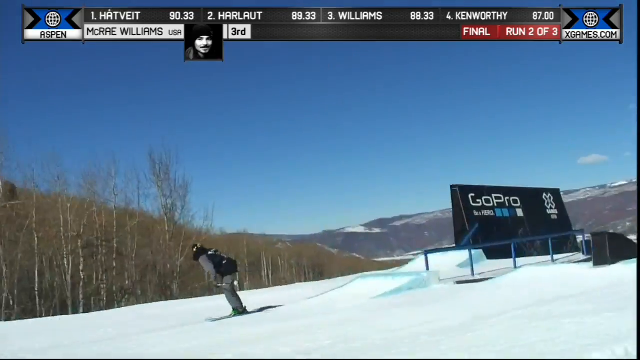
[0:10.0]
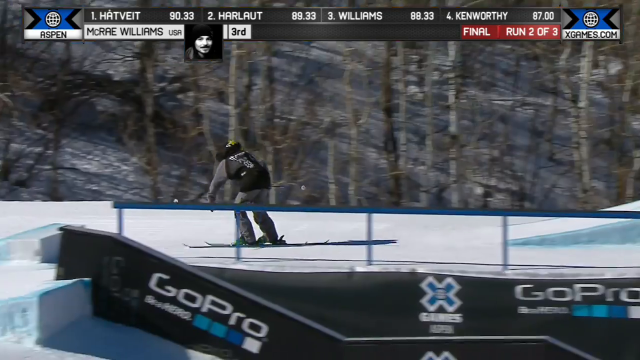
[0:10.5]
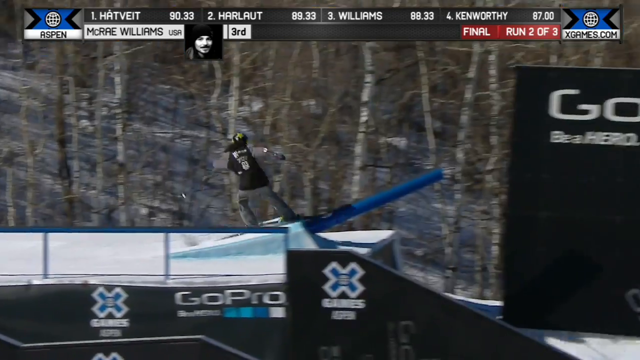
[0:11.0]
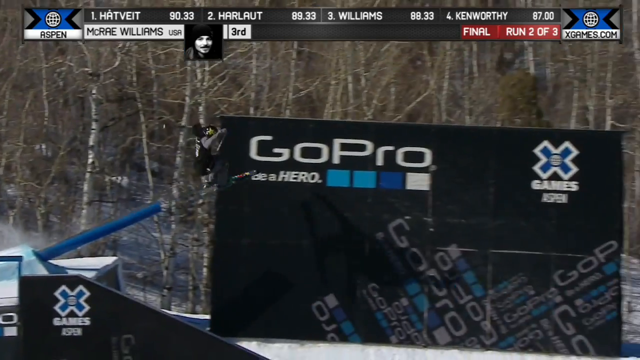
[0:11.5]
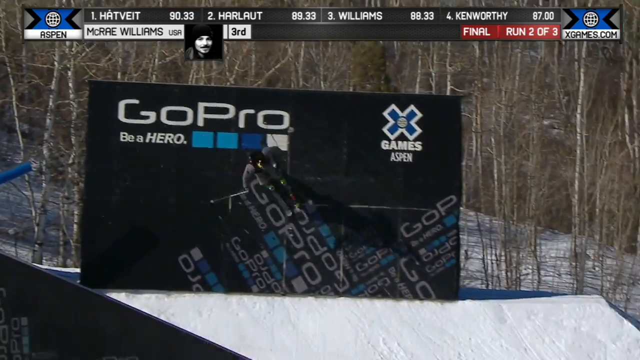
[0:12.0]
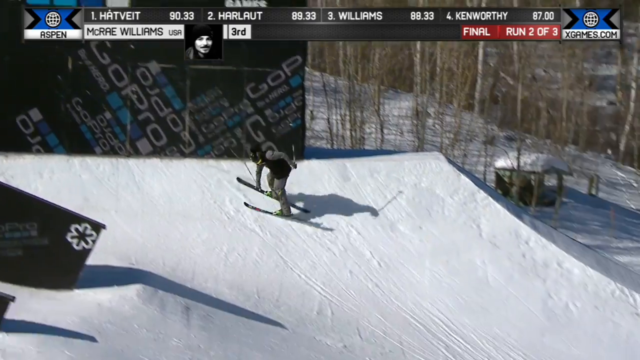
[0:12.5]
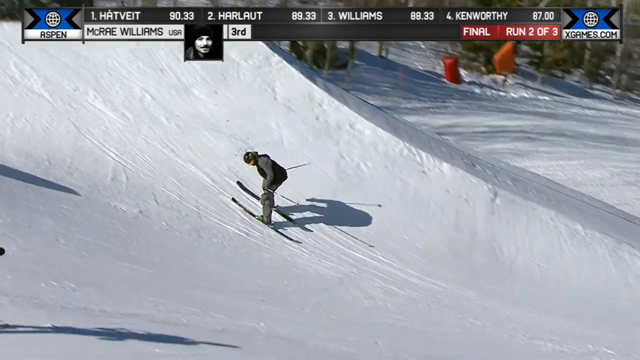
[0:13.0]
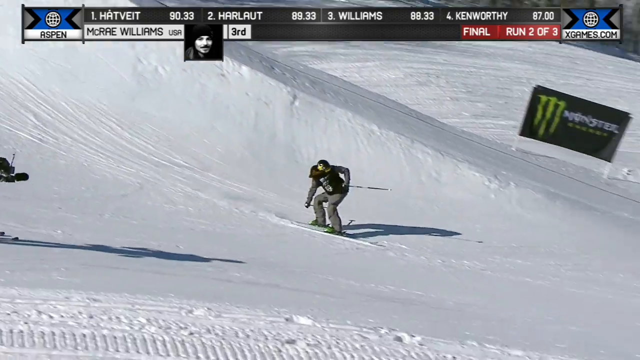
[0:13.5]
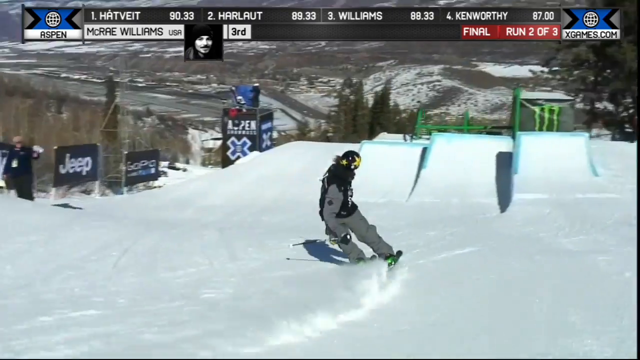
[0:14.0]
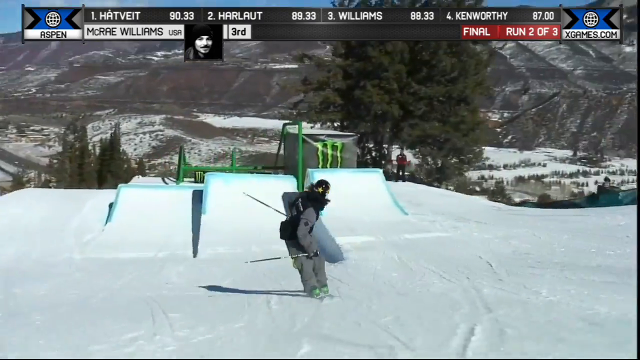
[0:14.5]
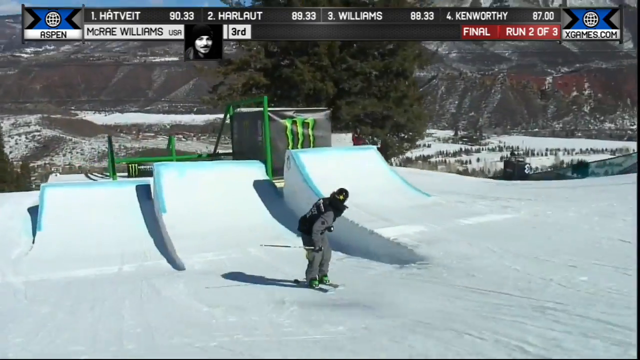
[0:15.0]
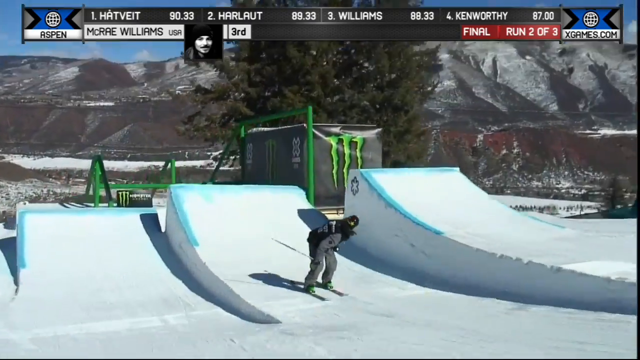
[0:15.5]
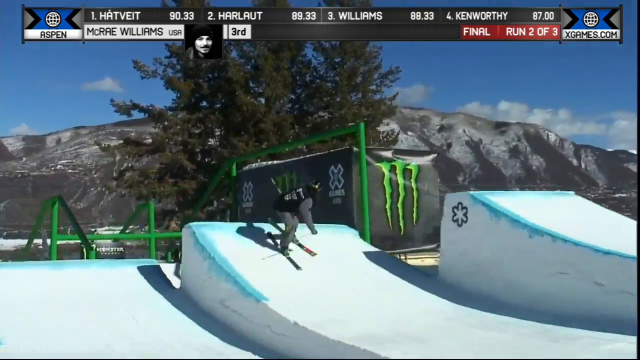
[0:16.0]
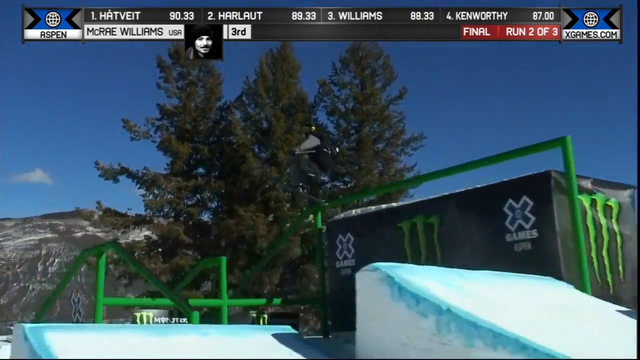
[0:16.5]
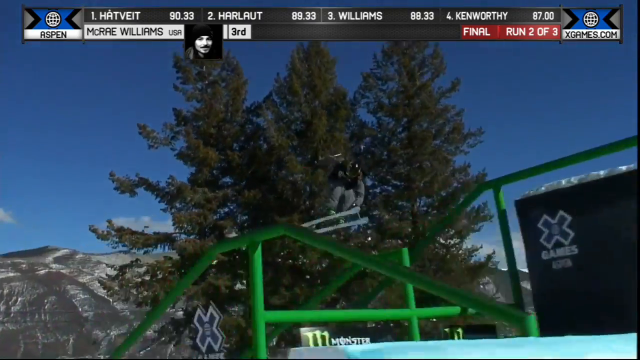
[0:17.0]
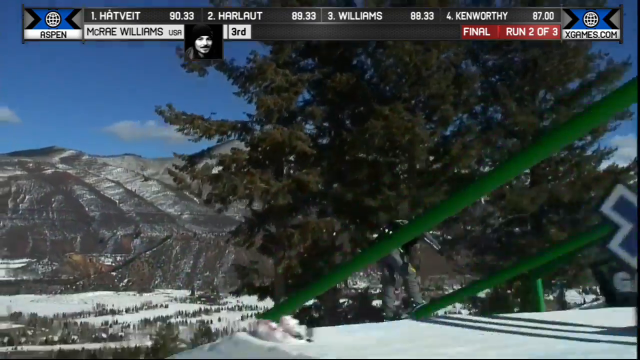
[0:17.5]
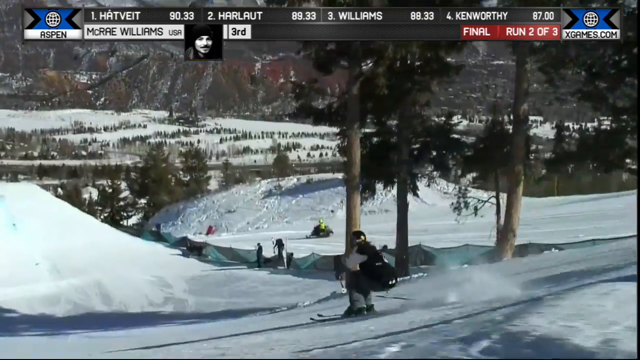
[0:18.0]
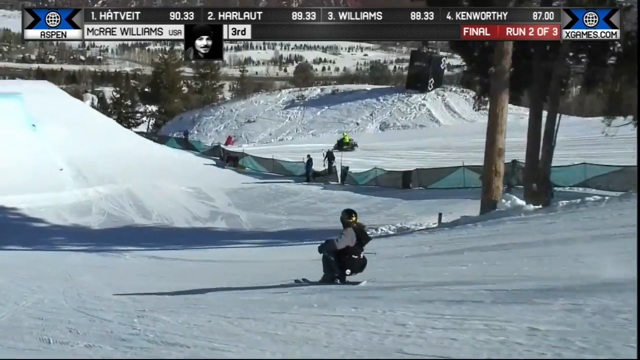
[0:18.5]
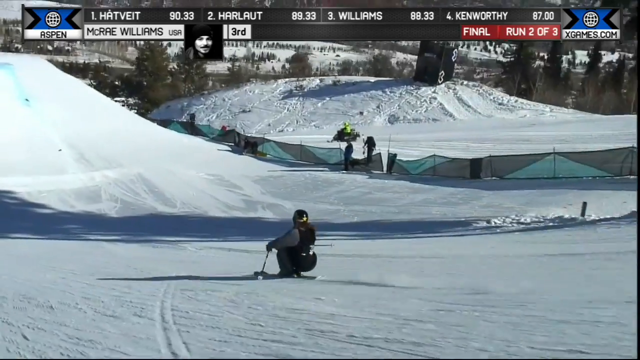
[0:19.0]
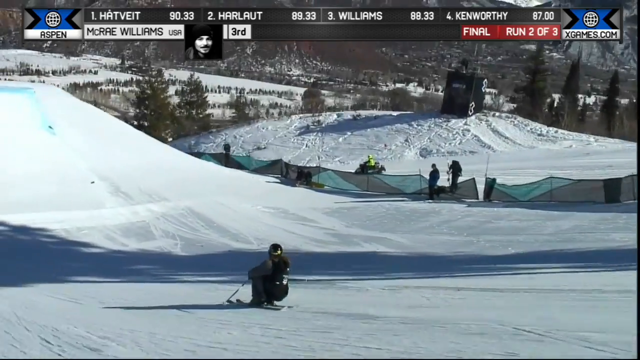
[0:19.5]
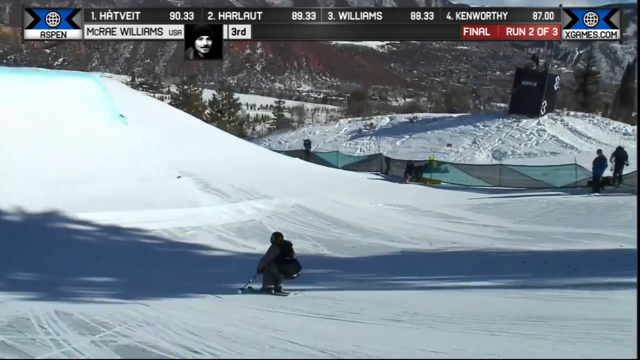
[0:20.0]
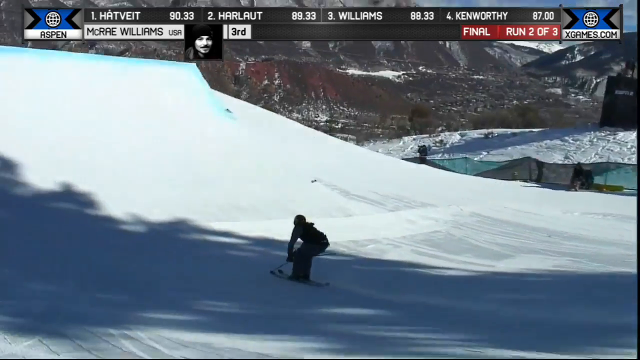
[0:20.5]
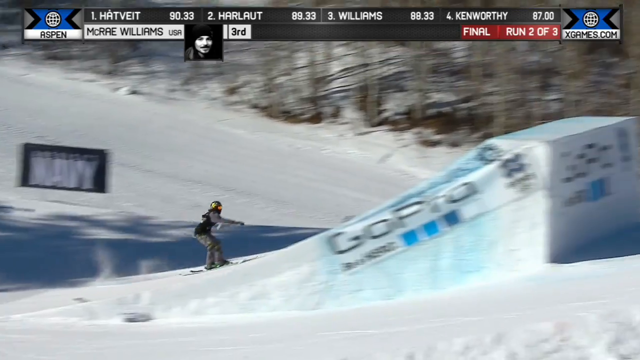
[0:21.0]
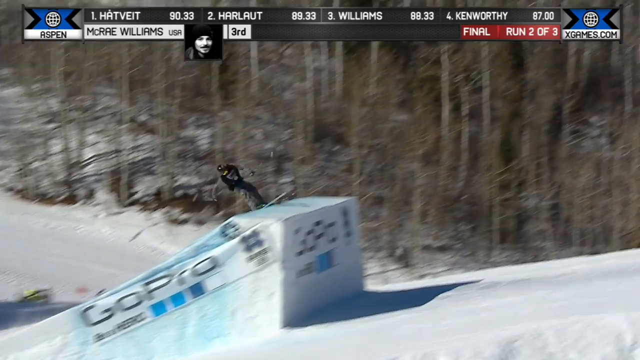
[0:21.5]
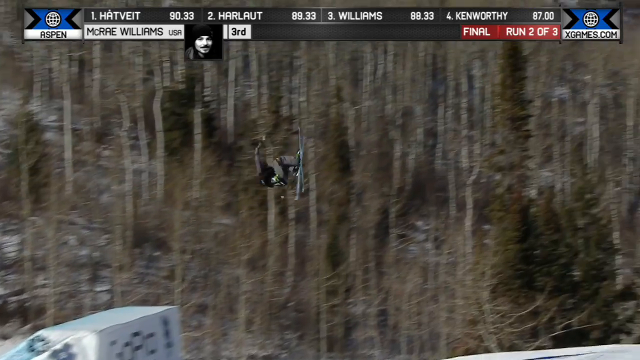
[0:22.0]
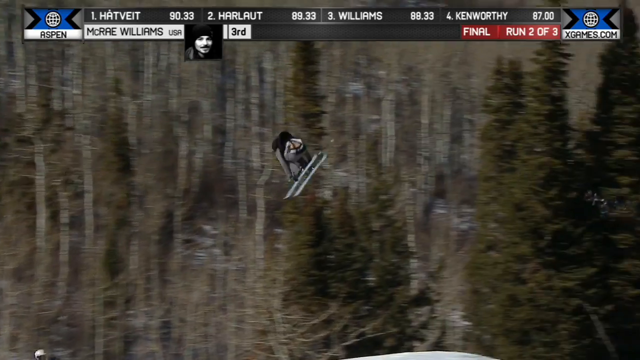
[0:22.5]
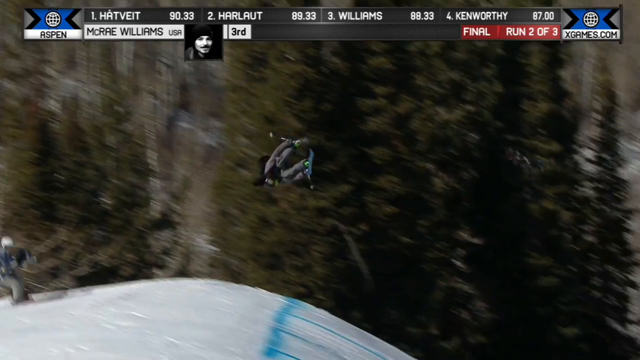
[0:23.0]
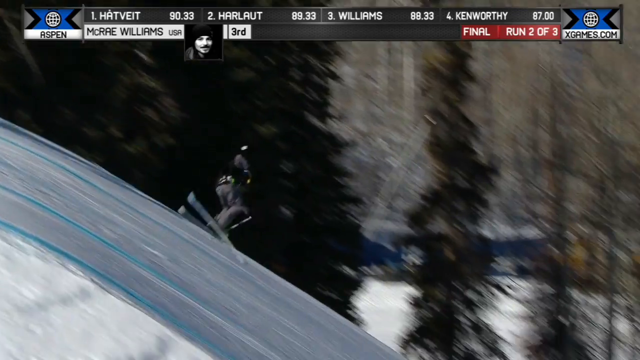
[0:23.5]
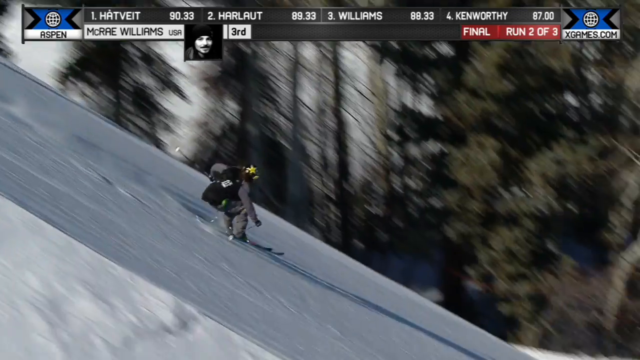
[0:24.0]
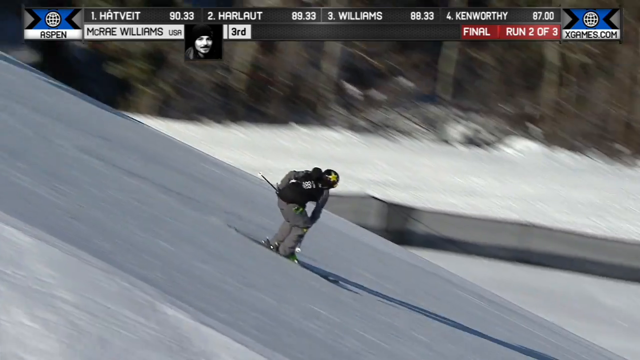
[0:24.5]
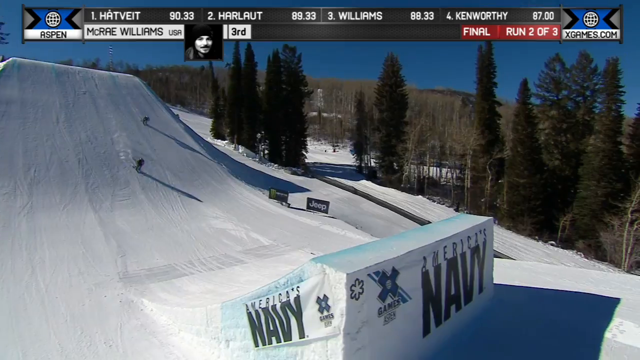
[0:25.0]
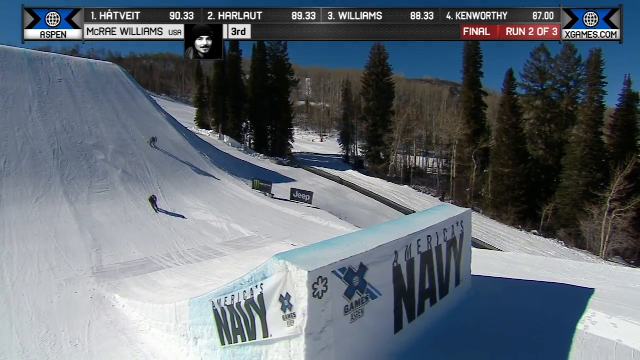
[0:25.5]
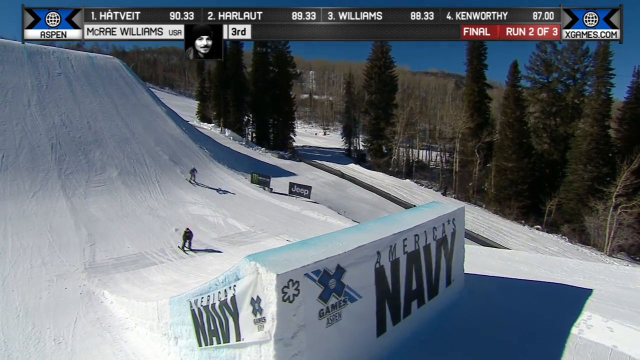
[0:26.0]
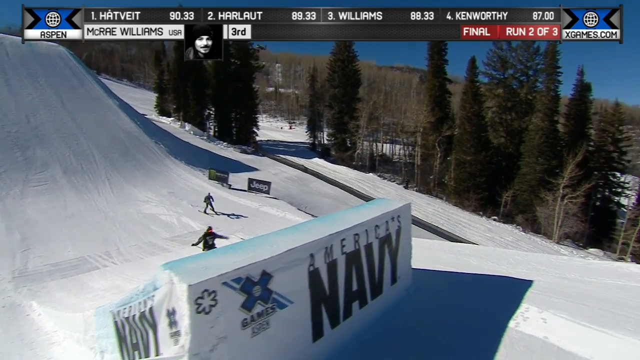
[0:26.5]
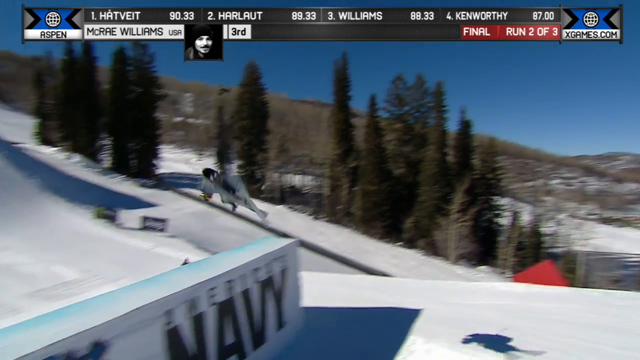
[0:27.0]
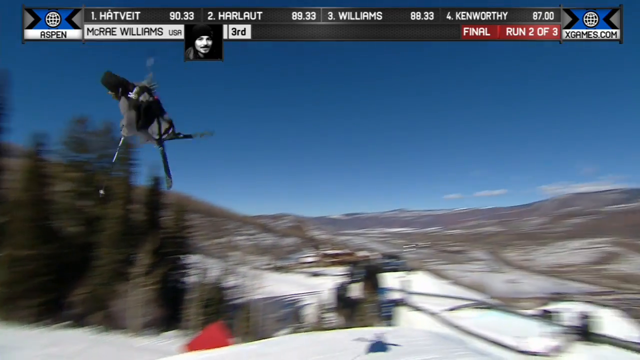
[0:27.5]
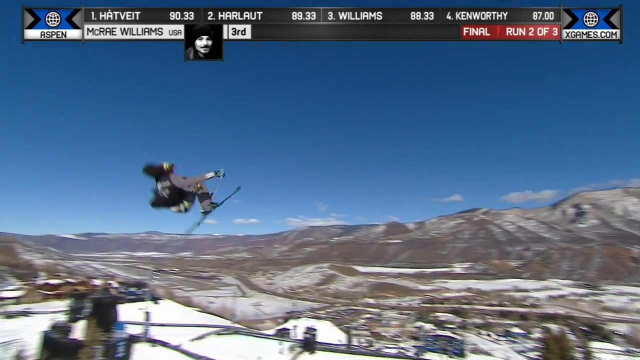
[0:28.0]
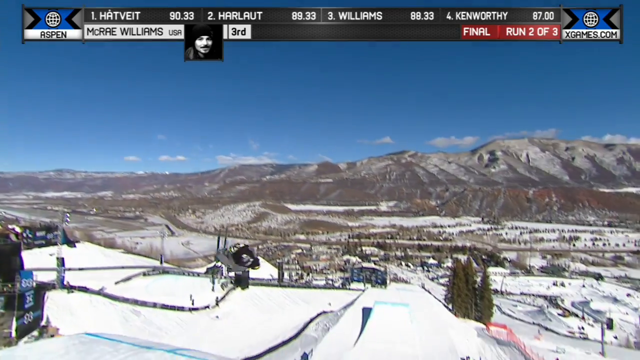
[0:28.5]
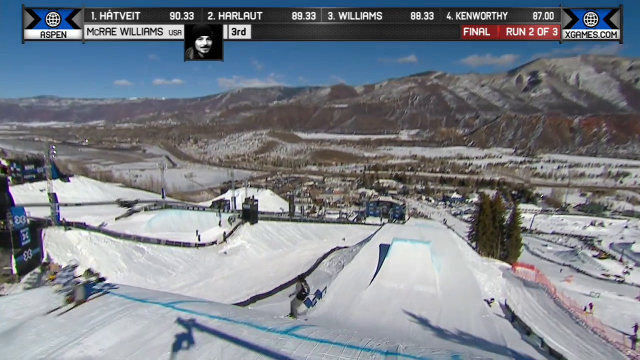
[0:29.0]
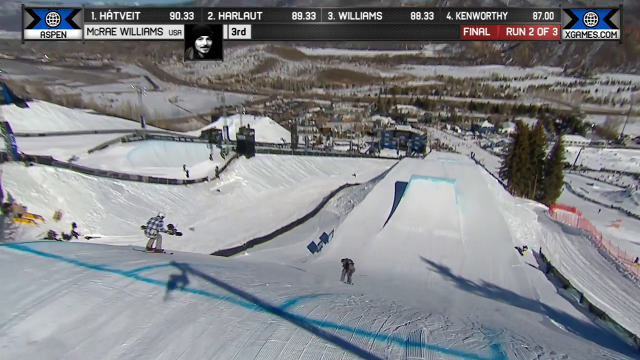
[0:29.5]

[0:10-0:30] At an X Games skiing competition, a skier wearing a black ski suit, a black helmet and yellow opaque goggles skis down the slope facing backwards, looking up the slope rather than where they are going, and lets the momentum carry them over a ramp. They take to the air, flip, and land on their feet still facing backwards before turning, then ski on their side toward another ramp. The ramps are set up in groups of three: a short ramp, a medium ramp and a tall ramp. The skier hits the medium ramp in the middle, flies off it, does a full 360-degree spin in the air, and lands and keeps skiing. Now crouched and facing forward, they go up a large ramp and do three 360-degree turns in the air. At another ramp they do three more complete rotations in the air before landing. In the background is a large billboard advertising GoPro cameras, and many tall pine trees surround the snowy slope.